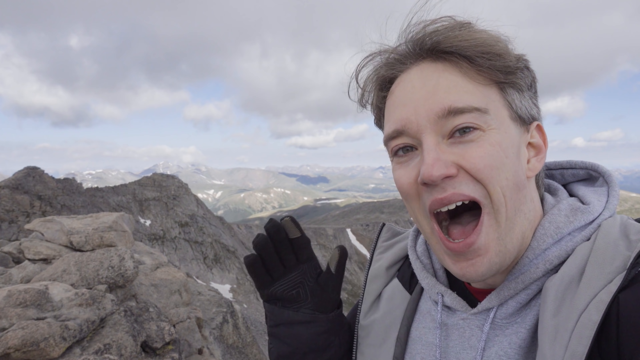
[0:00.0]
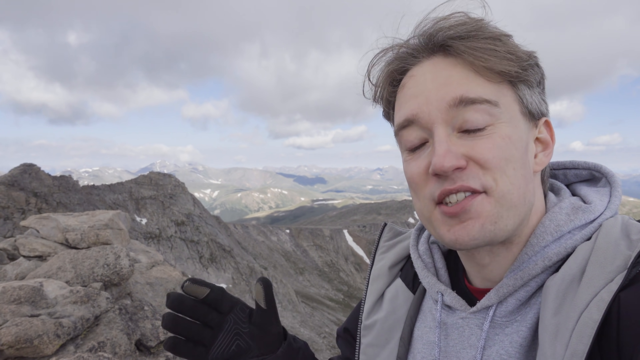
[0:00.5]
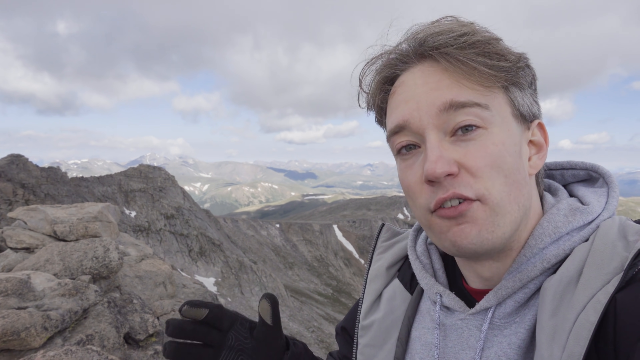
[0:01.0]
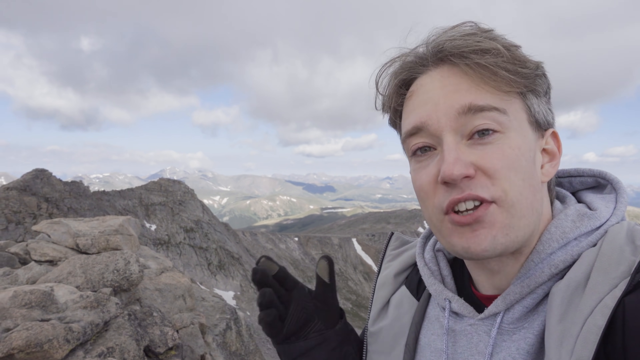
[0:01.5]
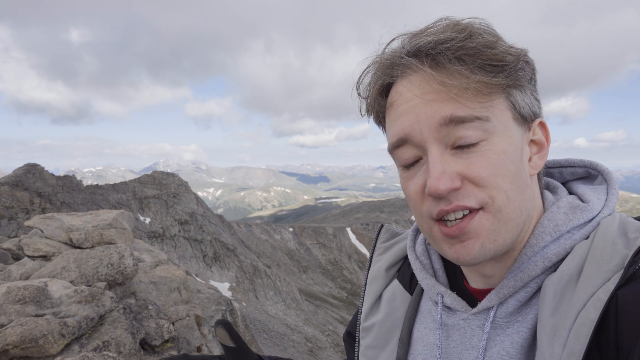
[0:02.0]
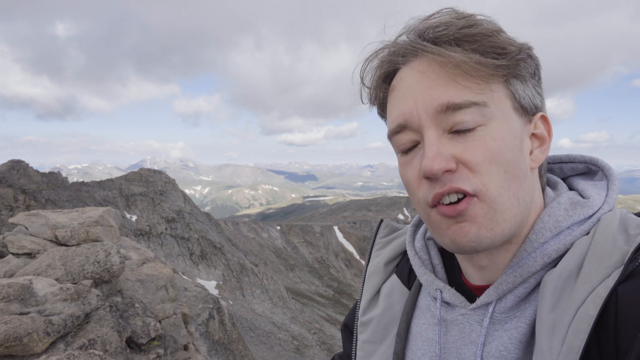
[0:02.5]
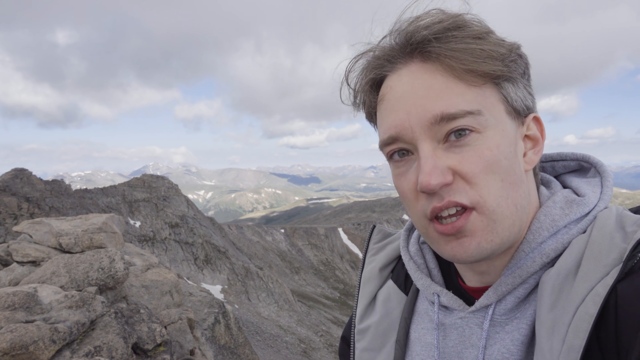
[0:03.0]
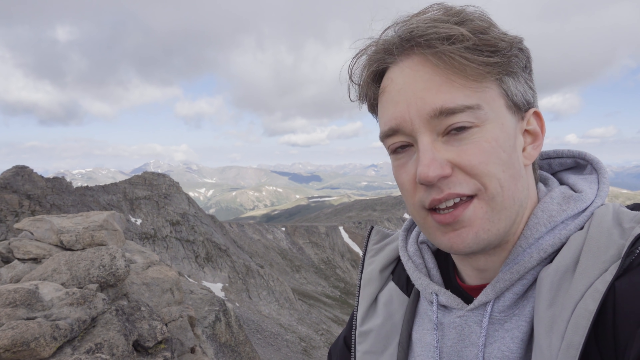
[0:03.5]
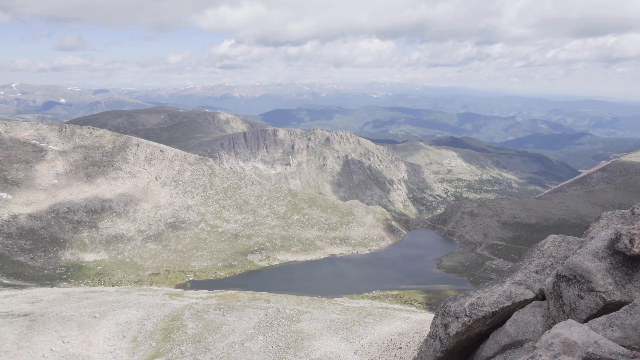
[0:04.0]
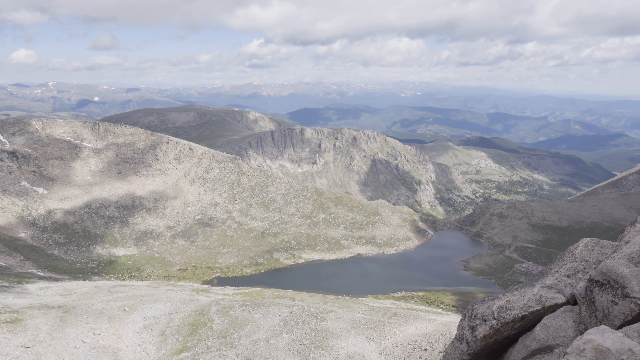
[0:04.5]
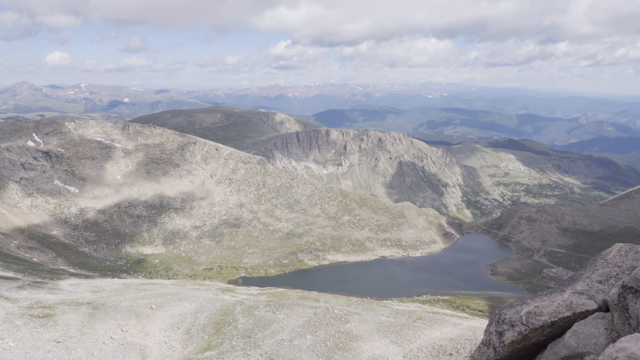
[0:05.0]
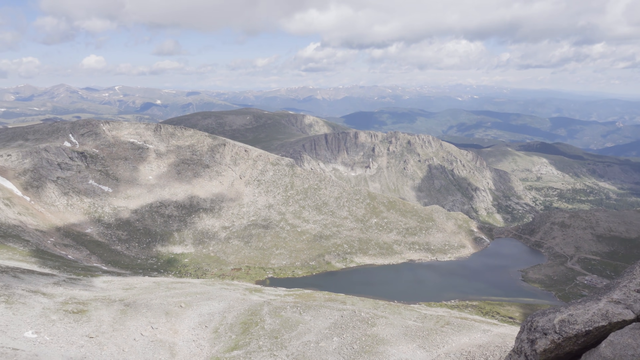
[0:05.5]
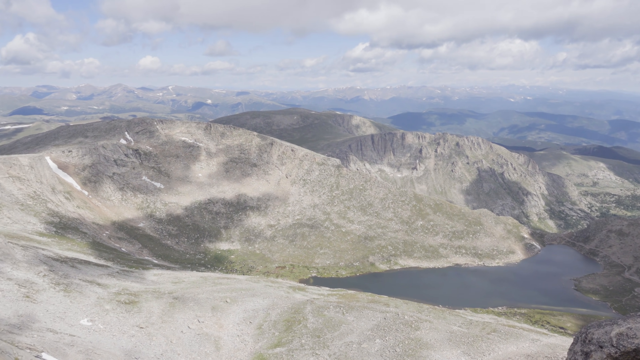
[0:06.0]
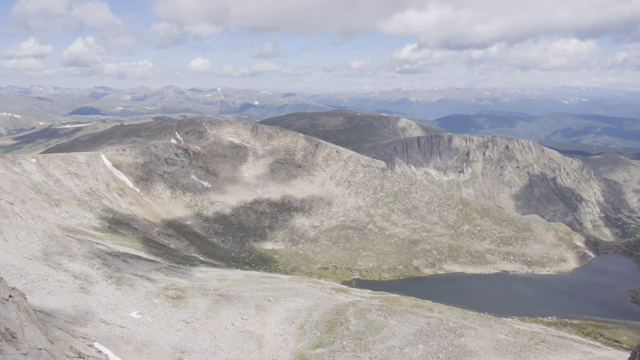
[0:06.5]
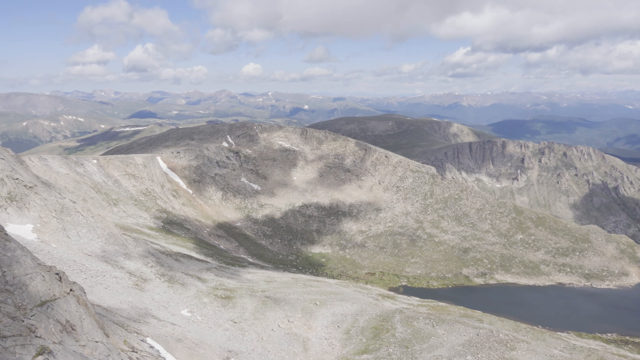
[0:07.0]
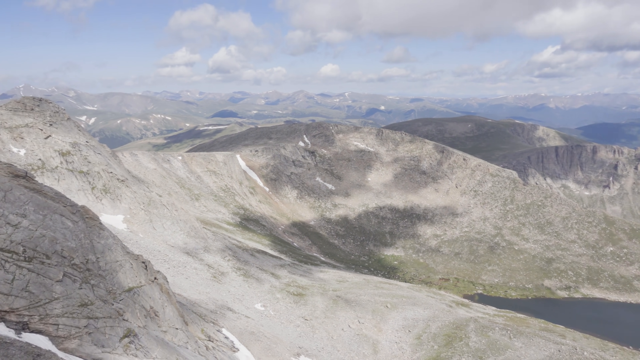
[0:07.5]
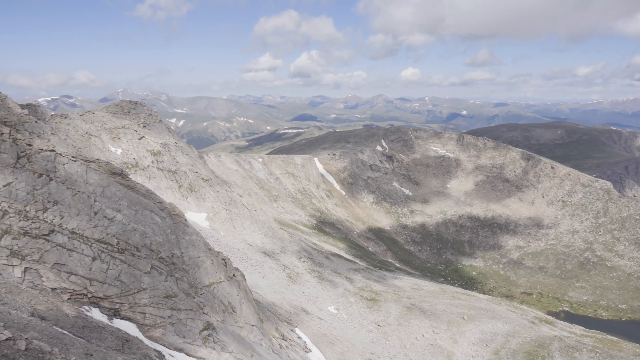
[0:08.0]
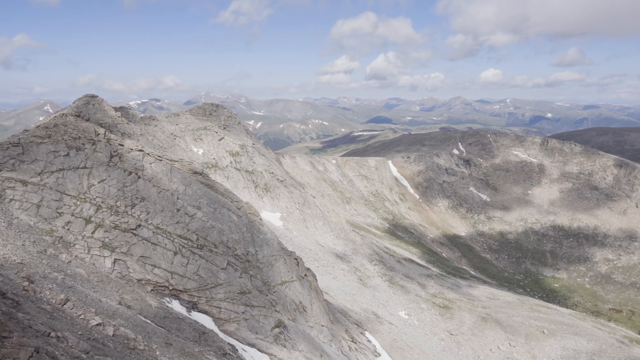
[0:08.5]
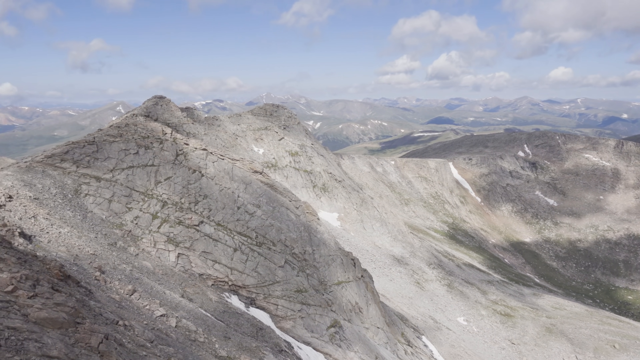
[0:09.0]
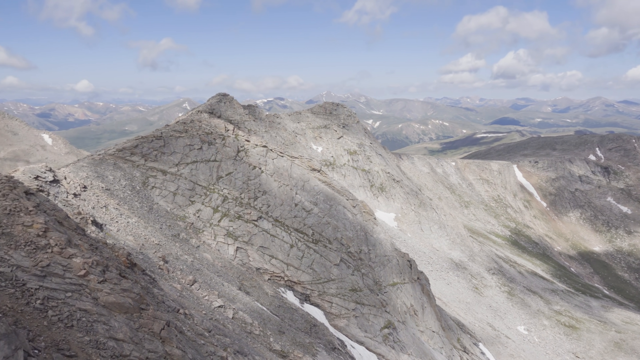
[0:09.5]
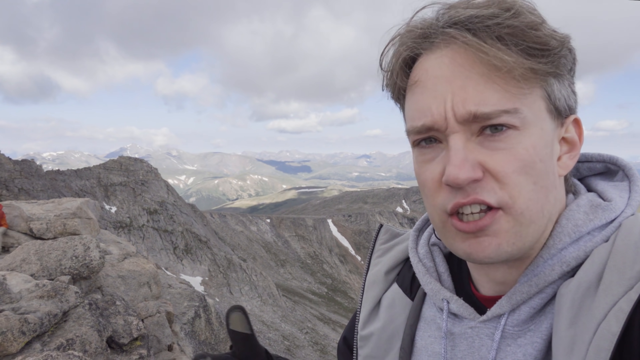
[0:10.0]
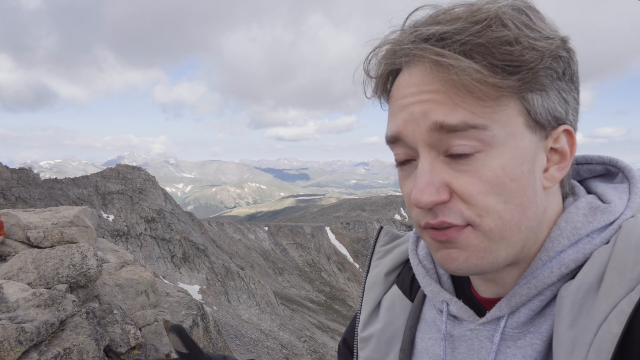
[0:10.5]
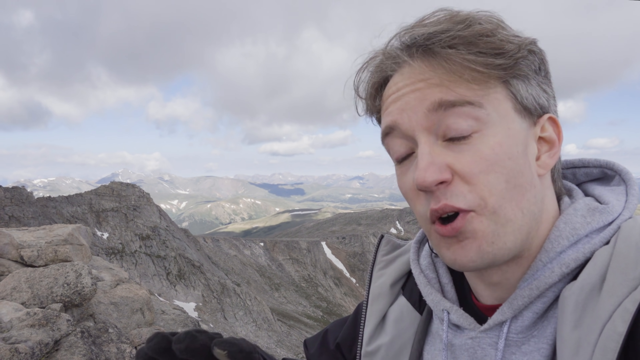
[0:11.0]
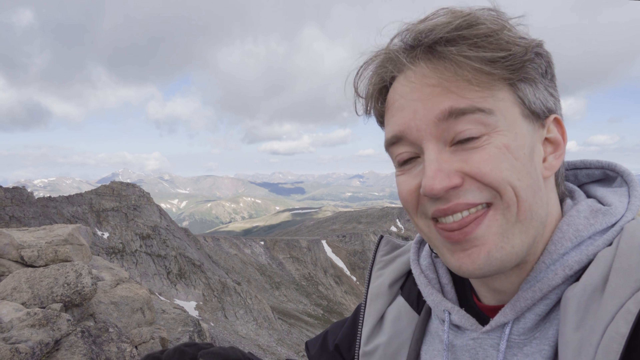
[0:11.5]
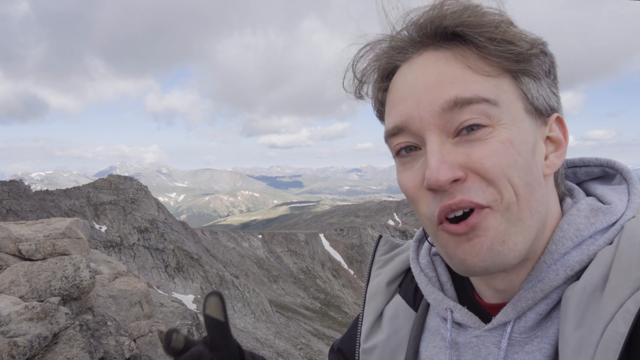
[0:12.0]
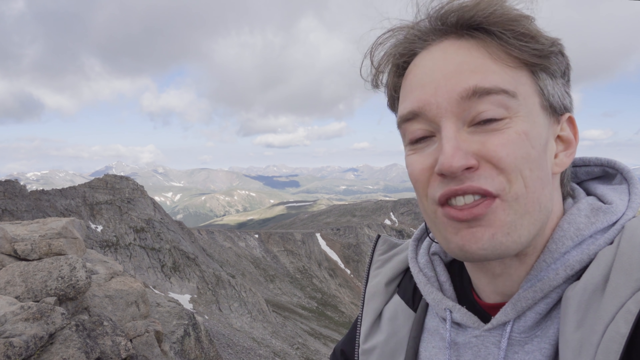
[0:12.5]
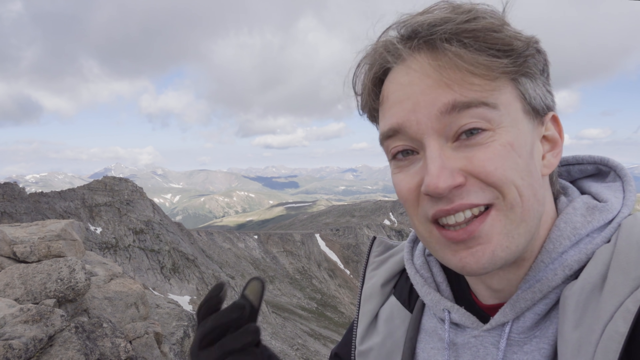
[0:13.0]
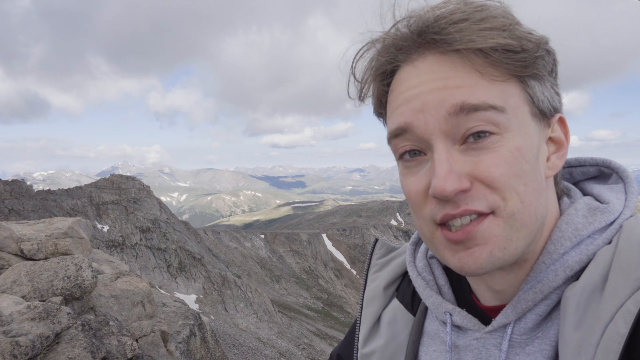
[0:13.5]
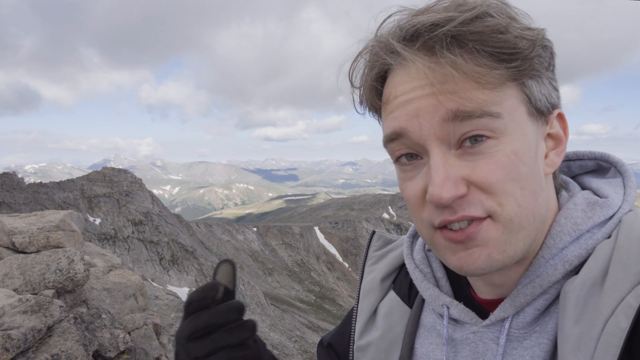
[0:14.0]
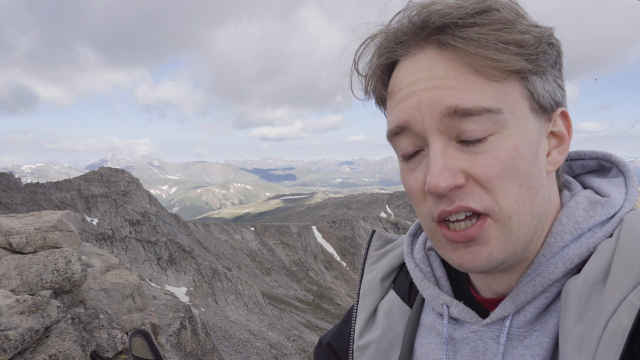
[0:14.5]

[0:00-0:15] Gray mountains form the setting, with rows and rows of mountains stretching across the landscape under a blue sky filled with clouds. A happy man with brown hair, gray at the sides of his head, speaks to the camera. He wears a black glove, a hoodie, what appears to be a red t-shirt underneath, and a black windbreaker with a gray inside. He appears to be standing atop the gray mountains, and the clouds appear to be close to him. The camera pans across the mountain landscape.